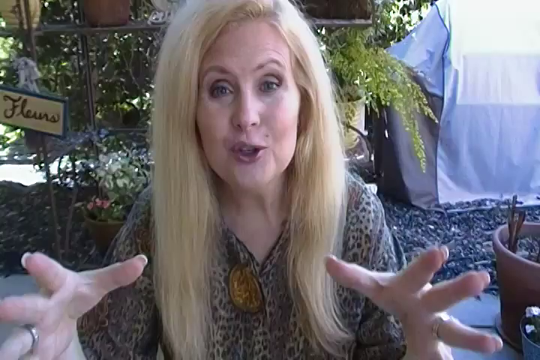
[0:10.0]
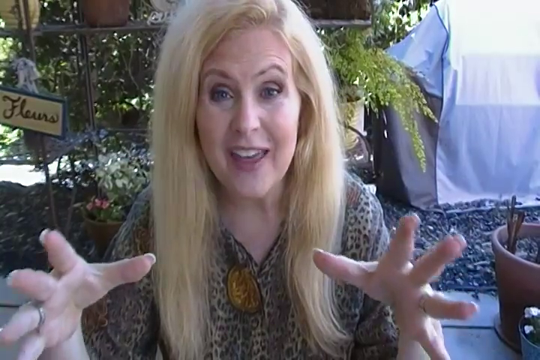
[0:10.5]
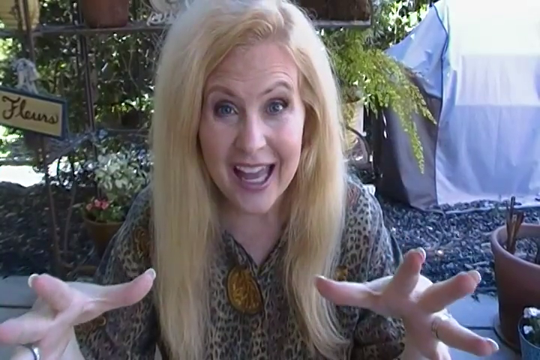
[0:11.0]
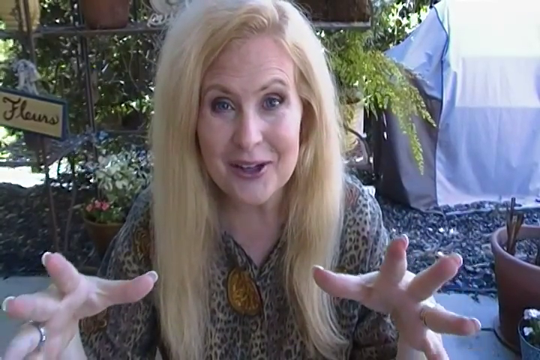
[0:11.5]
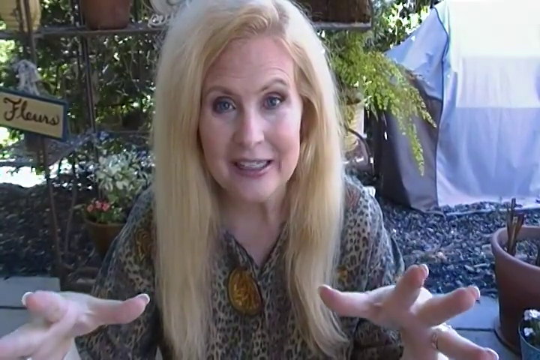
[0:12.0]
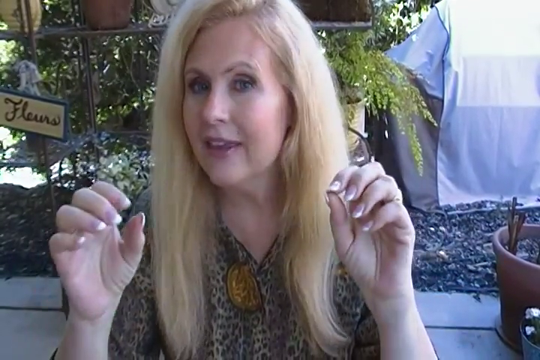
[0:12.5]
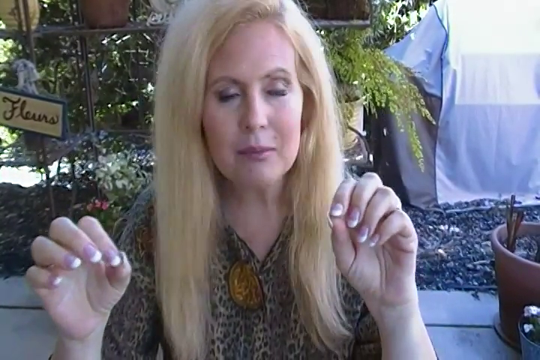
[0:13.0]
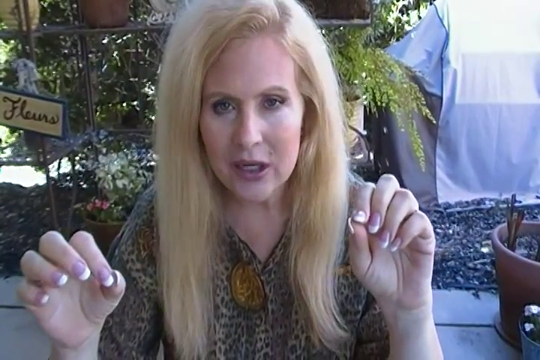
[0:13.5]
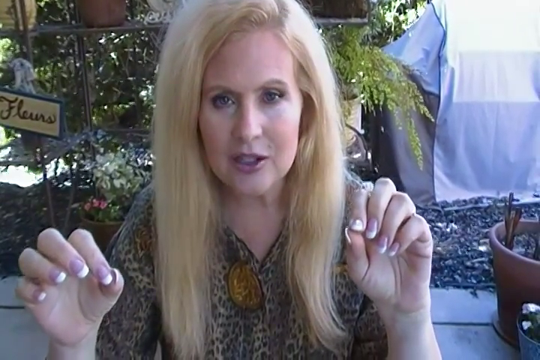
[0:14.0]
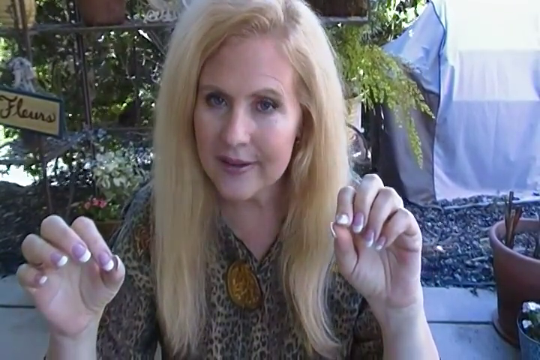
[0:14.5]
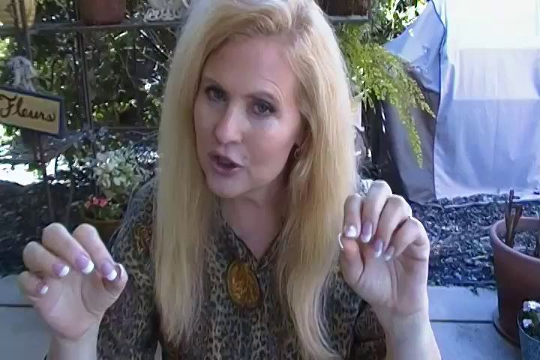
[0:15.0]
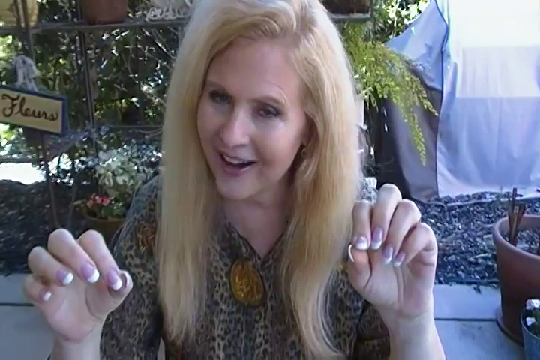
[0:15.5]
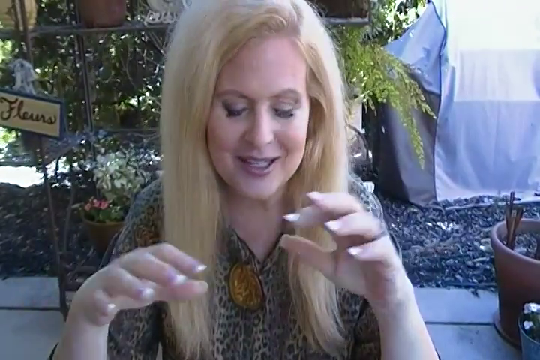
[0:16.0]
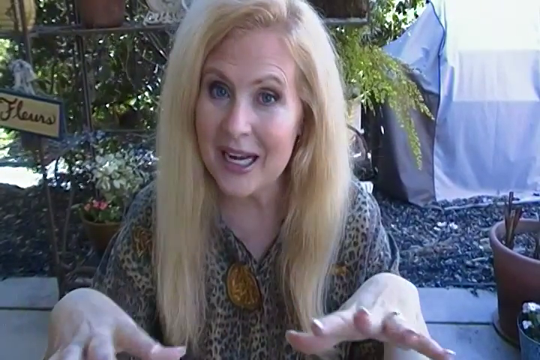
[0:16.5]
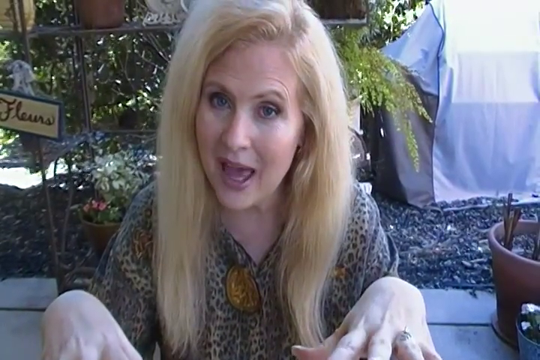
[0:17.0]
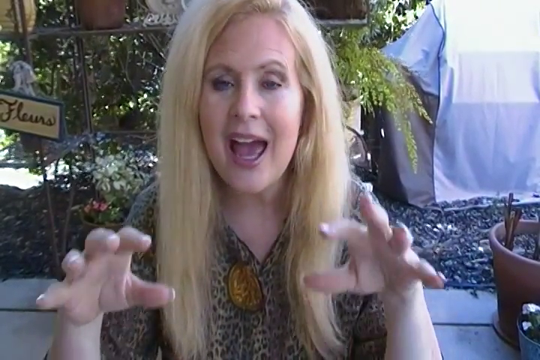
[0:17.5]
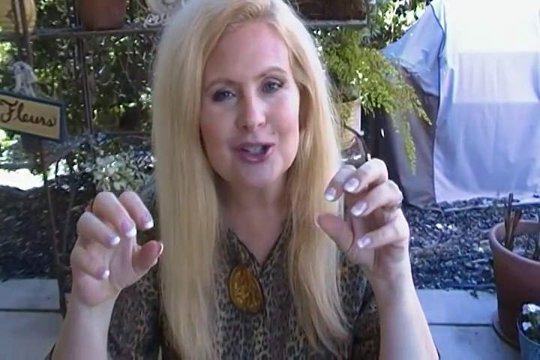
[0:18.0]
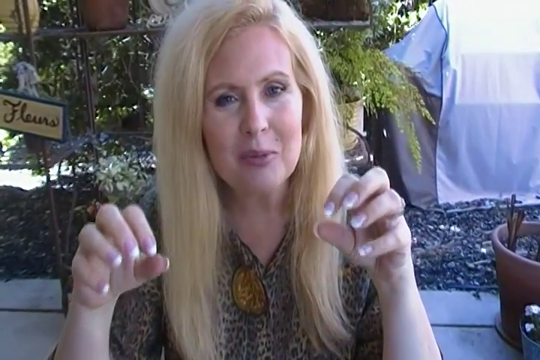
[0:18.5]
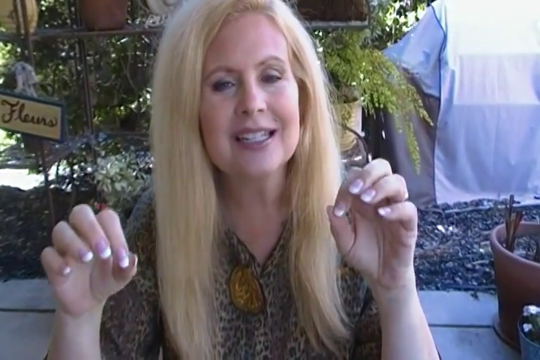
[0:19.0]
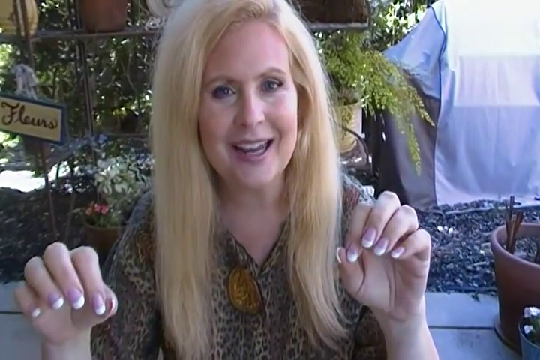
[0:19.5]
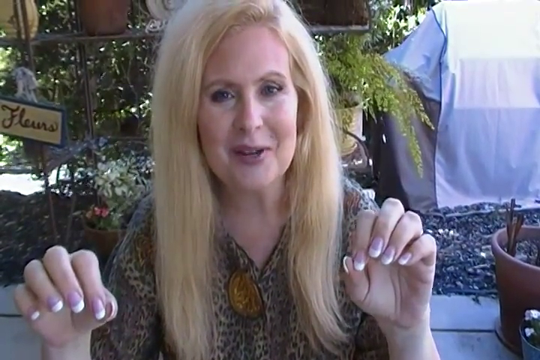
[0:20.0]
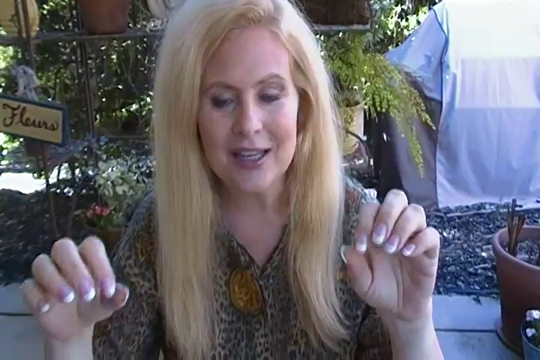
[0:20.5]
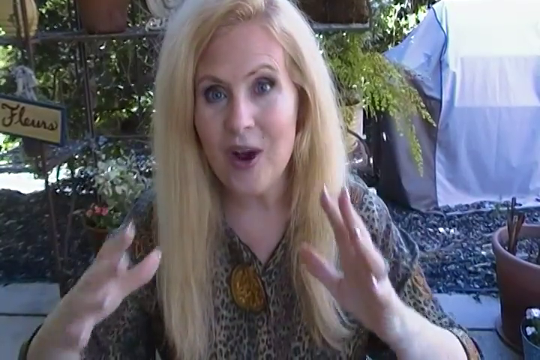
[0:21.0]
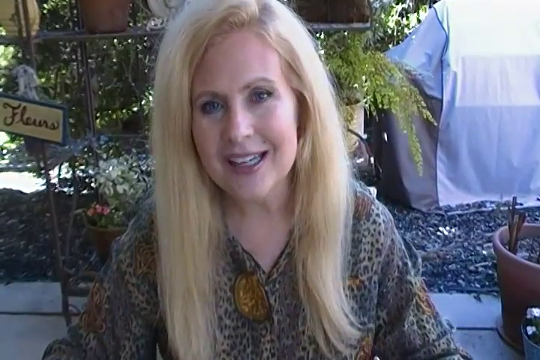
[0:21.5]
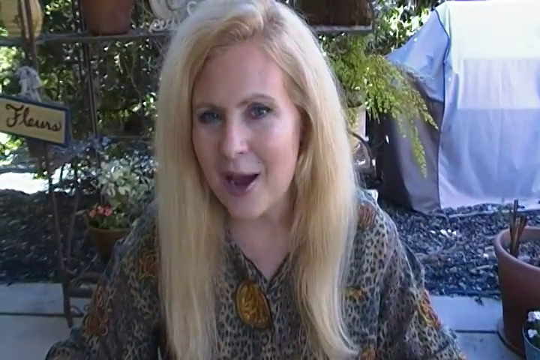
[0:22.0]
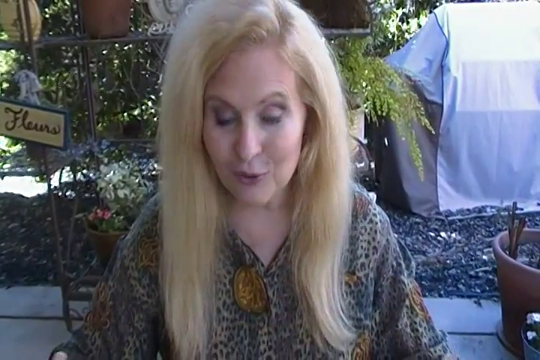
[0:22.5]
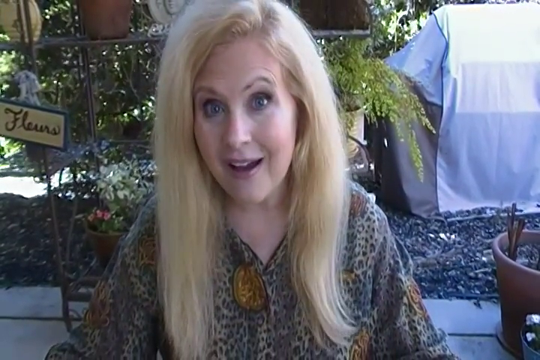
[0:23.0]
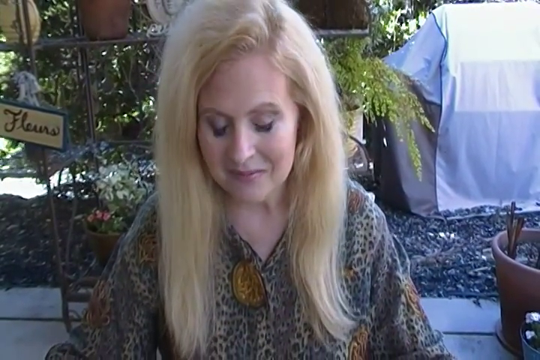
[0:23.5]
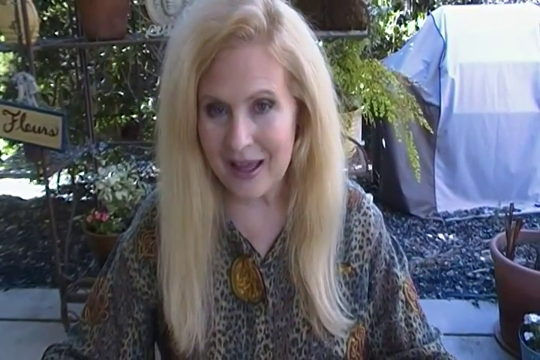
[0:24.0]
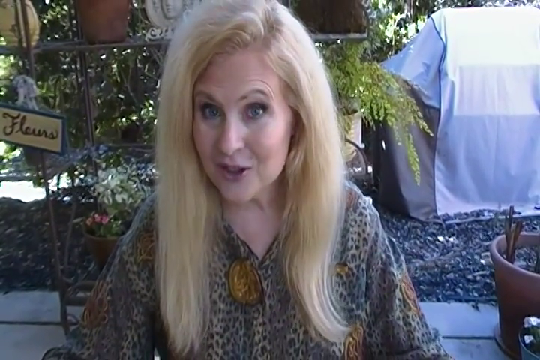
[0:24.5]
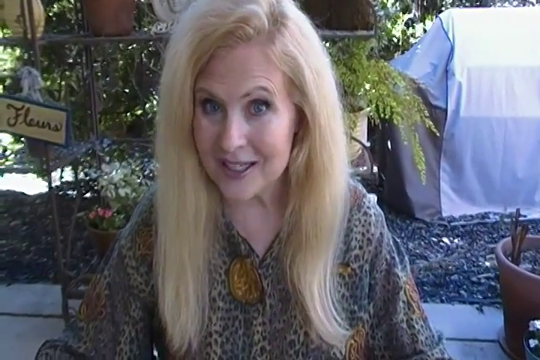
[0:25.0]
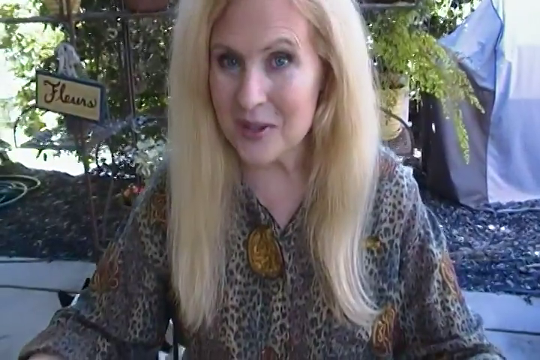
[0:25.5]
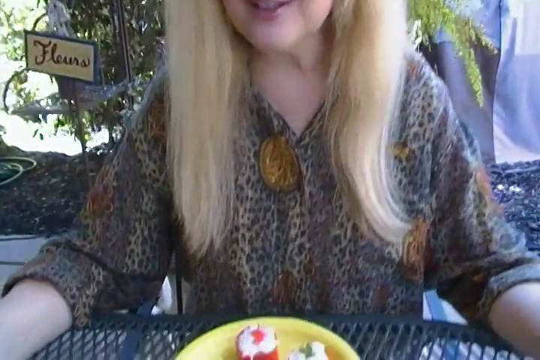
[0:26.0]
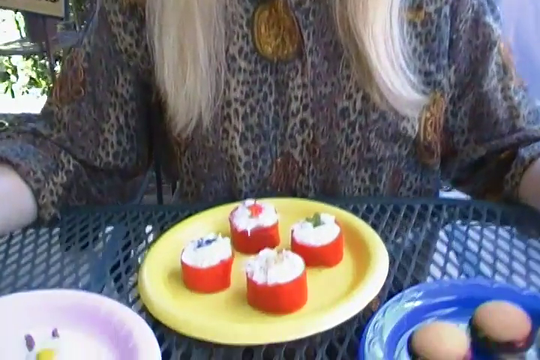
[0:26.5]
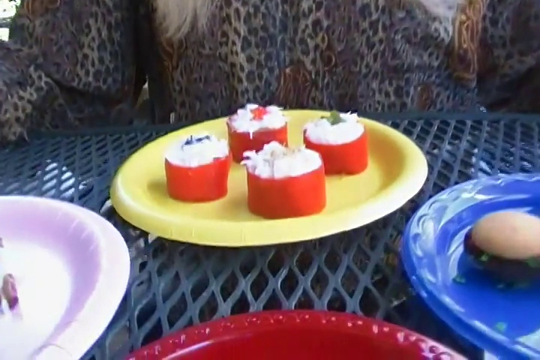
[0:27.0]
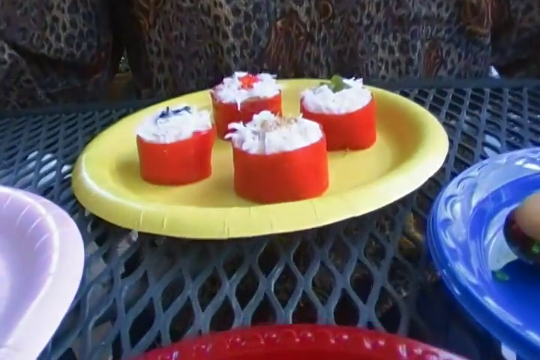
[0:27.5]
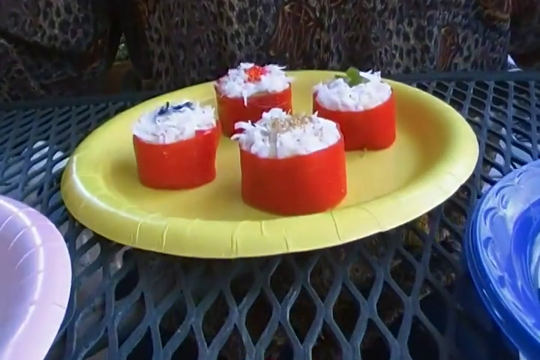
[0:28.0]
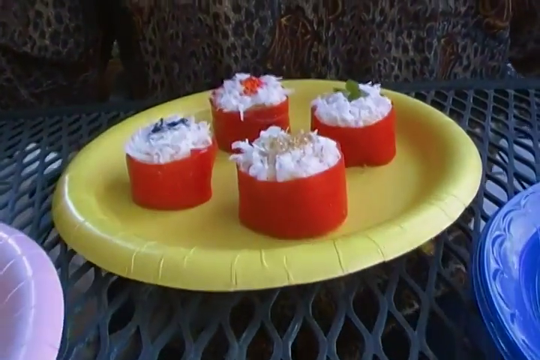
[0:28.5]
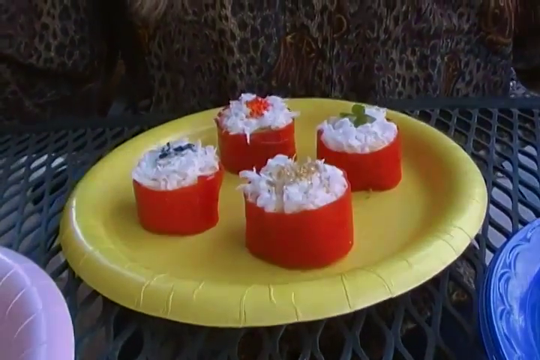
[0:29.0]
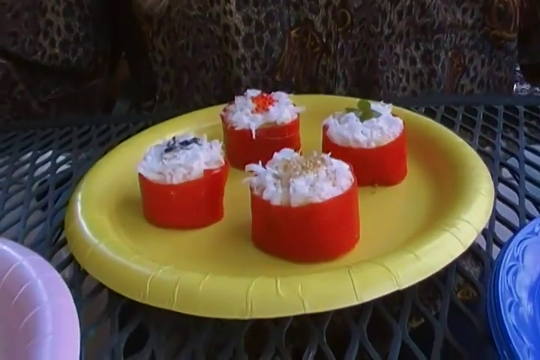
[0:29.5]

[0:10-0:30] The woman keeps speaking and making hand gestures, and her nails are visibly done and look good. While she speaks, the camera zooms down to show several foods on plates. The first food looks kind of like a roll; there are four of them, with some type of cream inside, like a red roll. There are three other plates whose contents cannot really be seen. The main focus is the first plate, a yellow plate right in front of her.